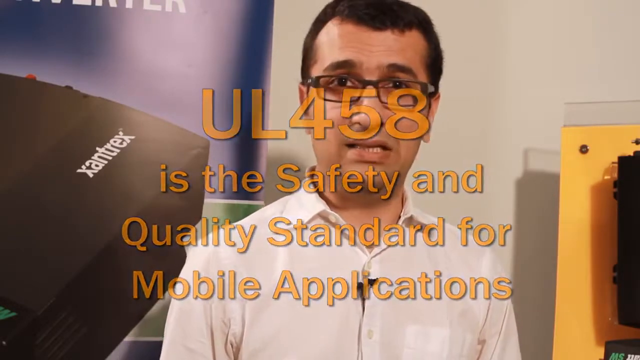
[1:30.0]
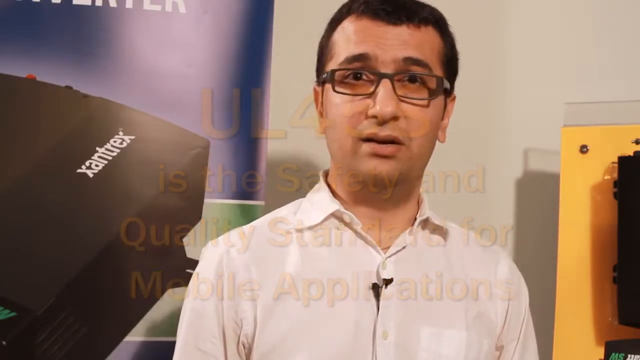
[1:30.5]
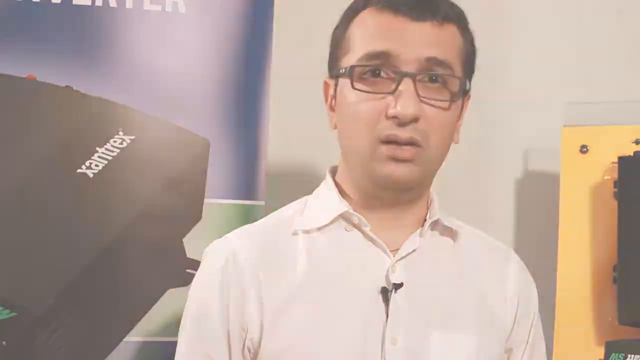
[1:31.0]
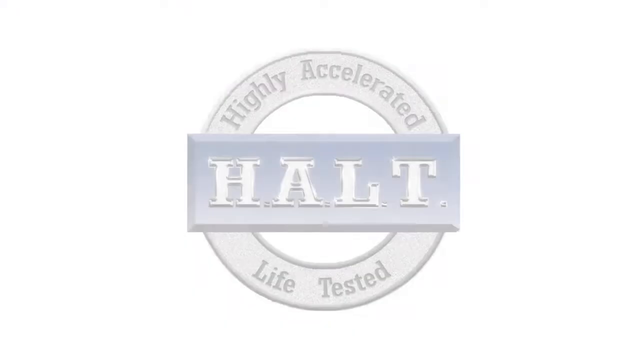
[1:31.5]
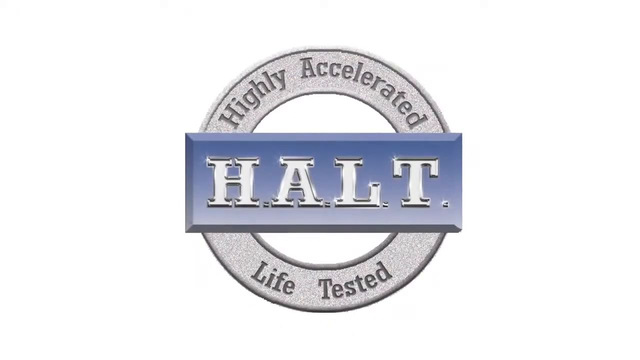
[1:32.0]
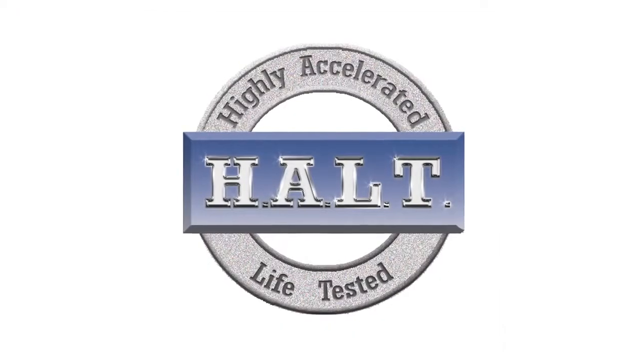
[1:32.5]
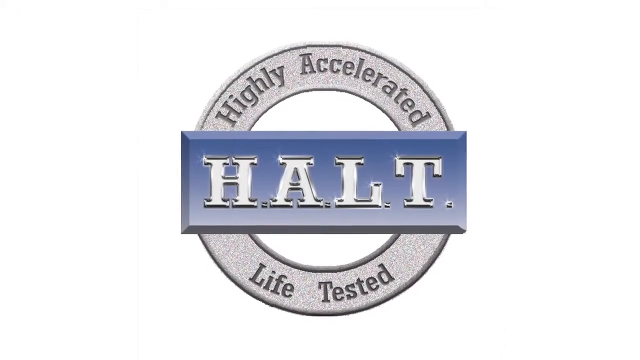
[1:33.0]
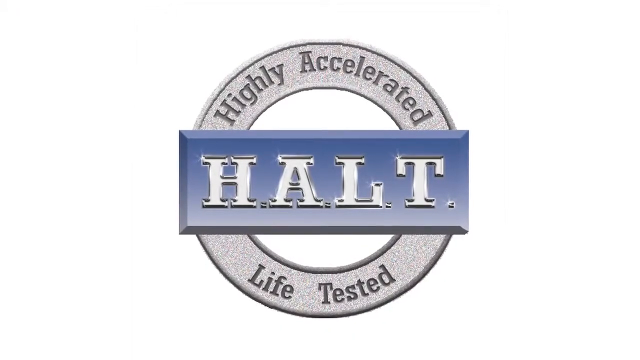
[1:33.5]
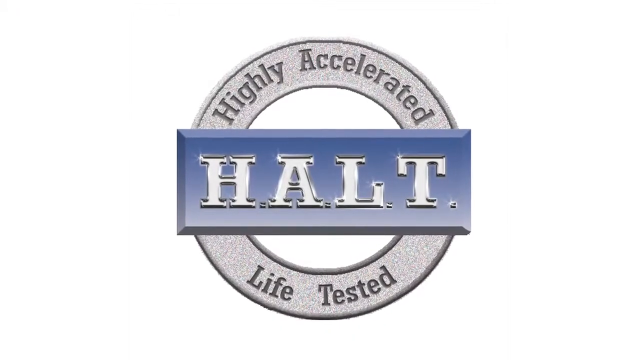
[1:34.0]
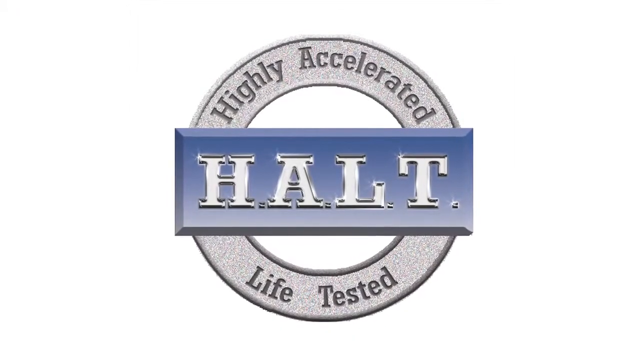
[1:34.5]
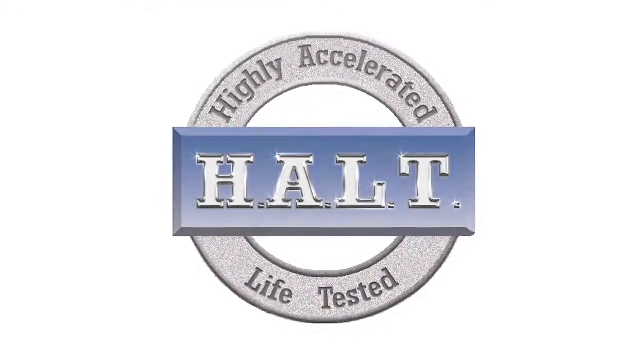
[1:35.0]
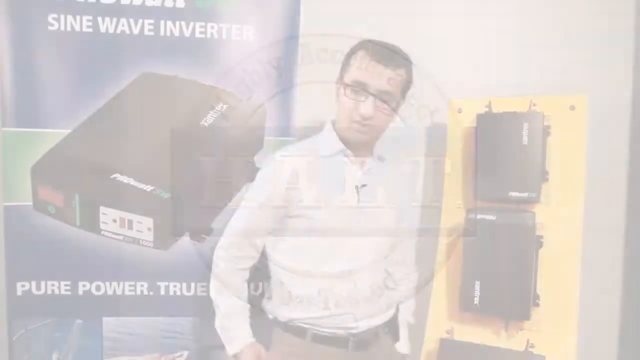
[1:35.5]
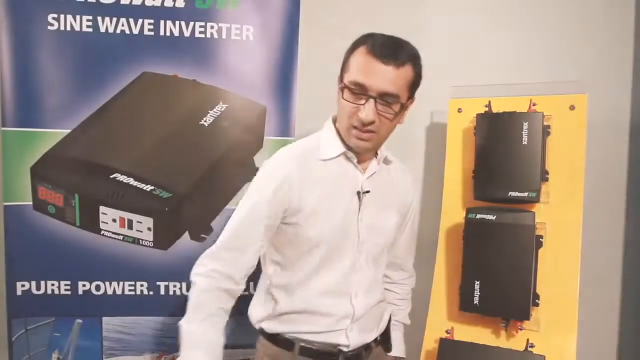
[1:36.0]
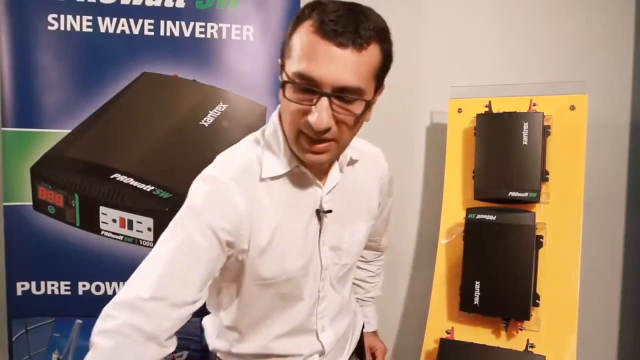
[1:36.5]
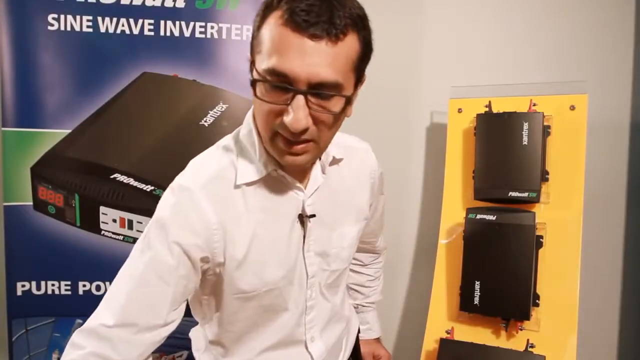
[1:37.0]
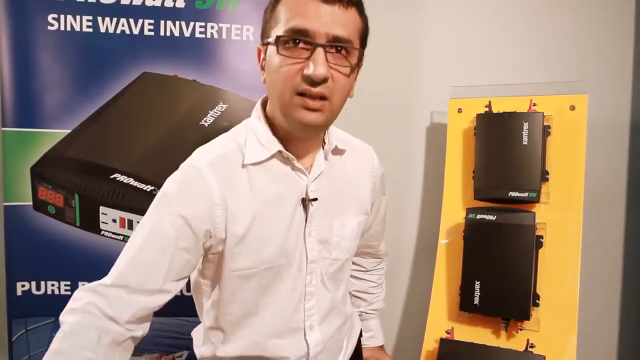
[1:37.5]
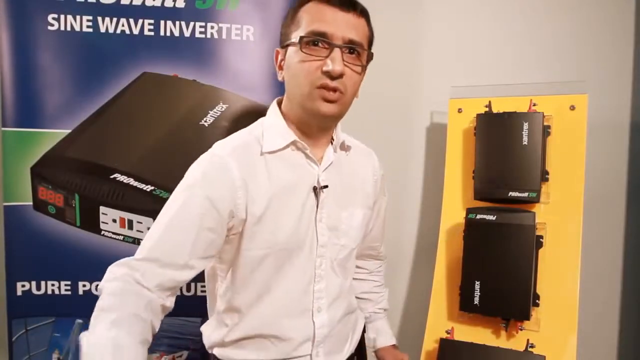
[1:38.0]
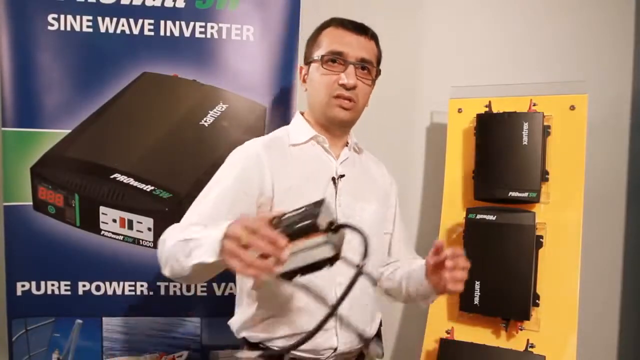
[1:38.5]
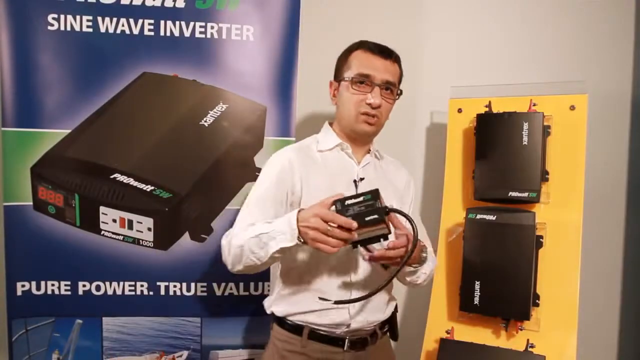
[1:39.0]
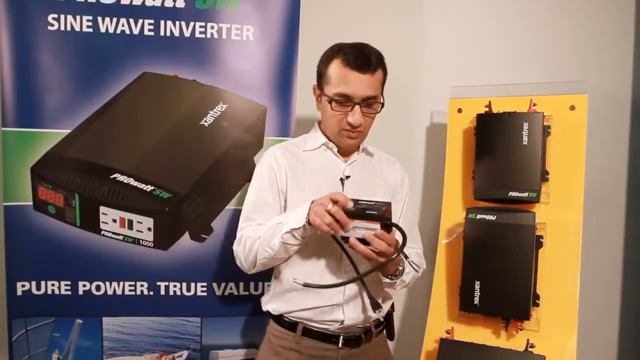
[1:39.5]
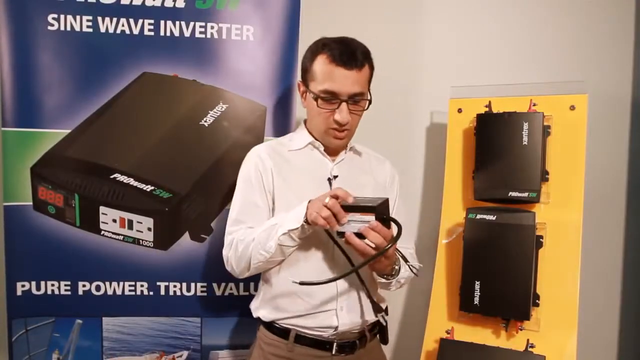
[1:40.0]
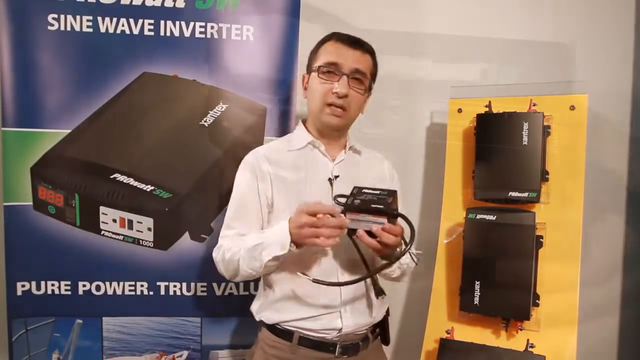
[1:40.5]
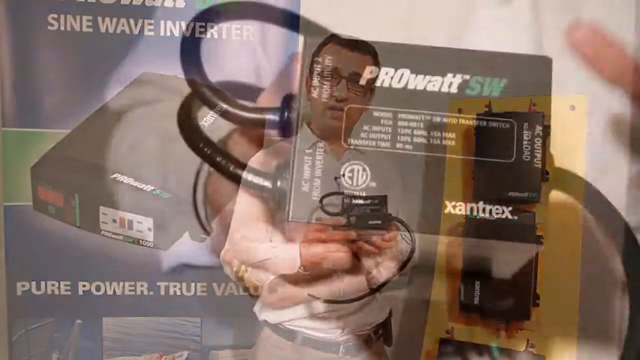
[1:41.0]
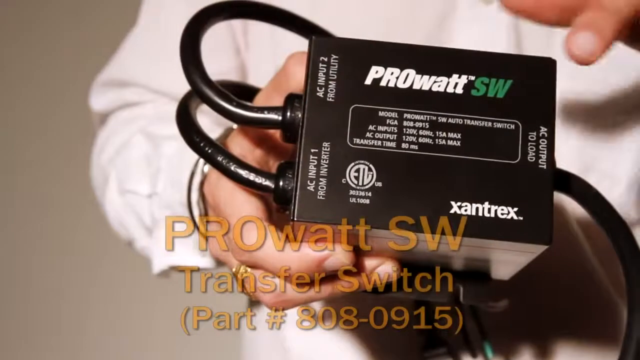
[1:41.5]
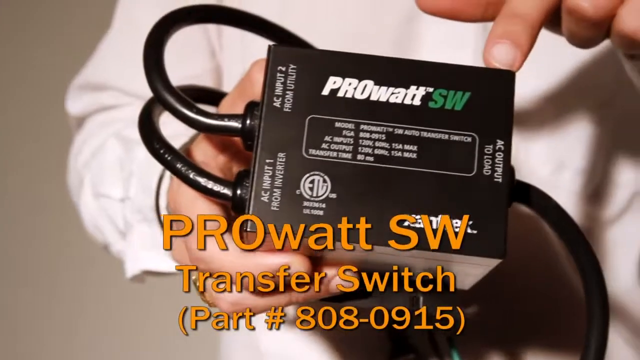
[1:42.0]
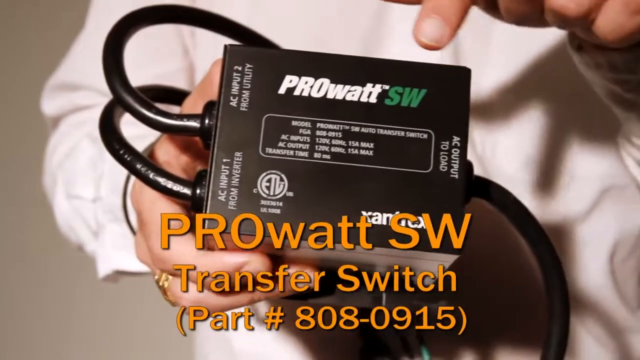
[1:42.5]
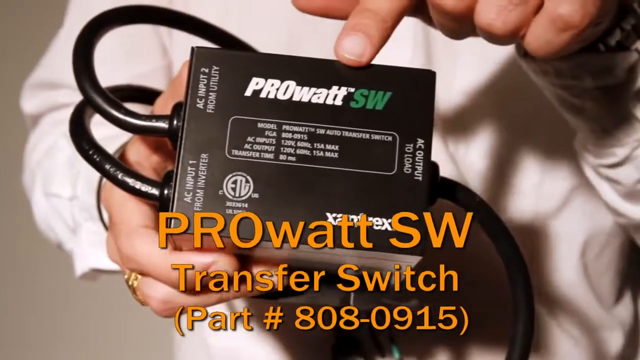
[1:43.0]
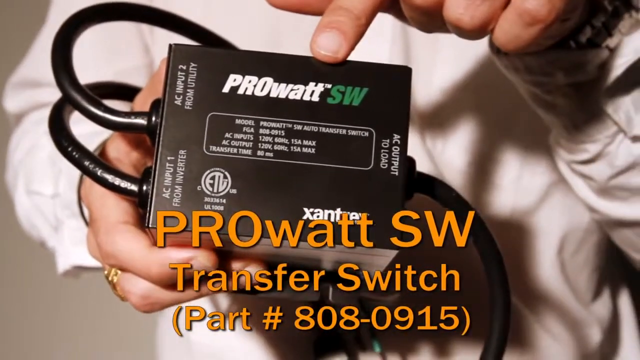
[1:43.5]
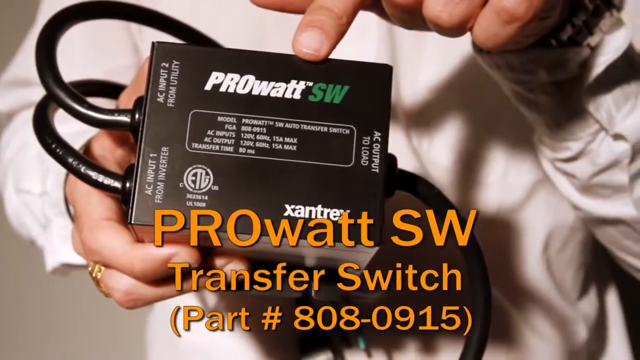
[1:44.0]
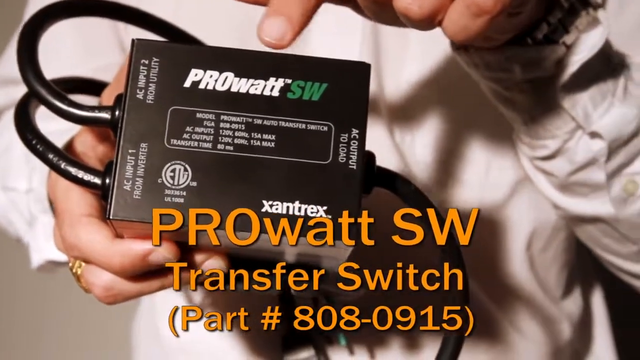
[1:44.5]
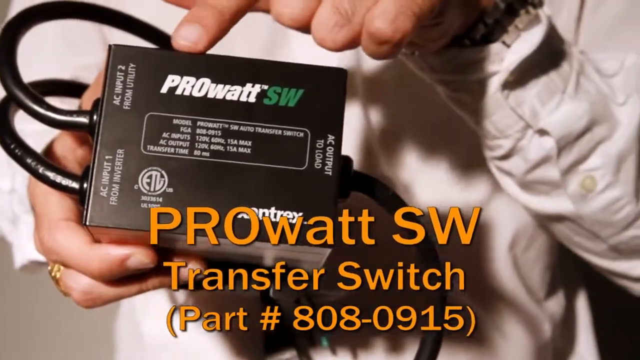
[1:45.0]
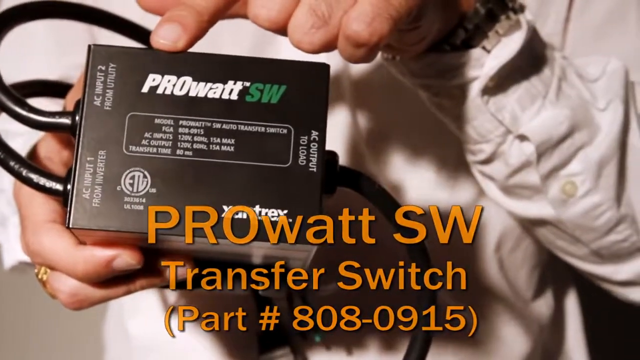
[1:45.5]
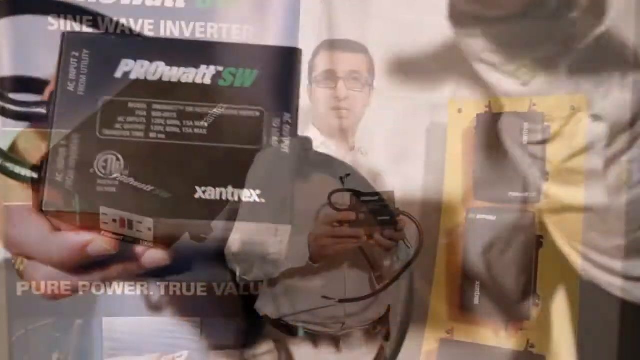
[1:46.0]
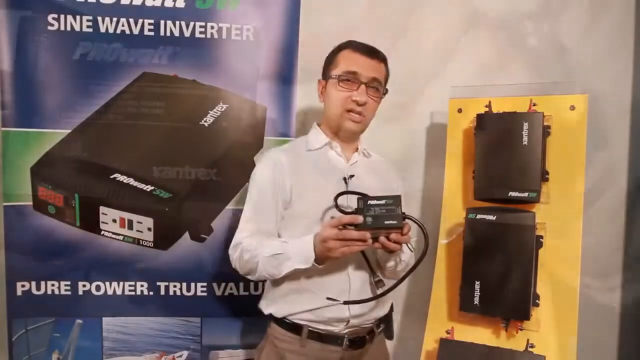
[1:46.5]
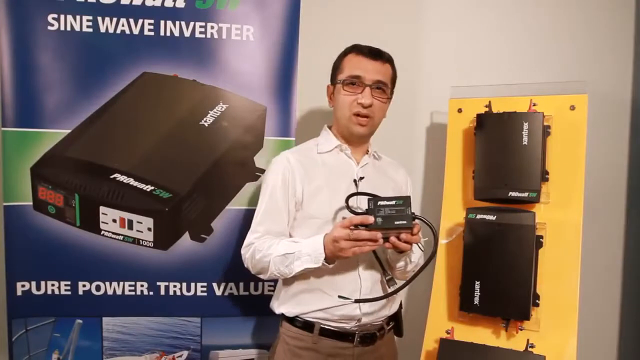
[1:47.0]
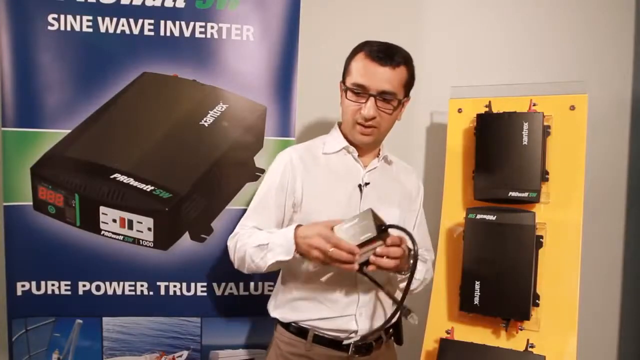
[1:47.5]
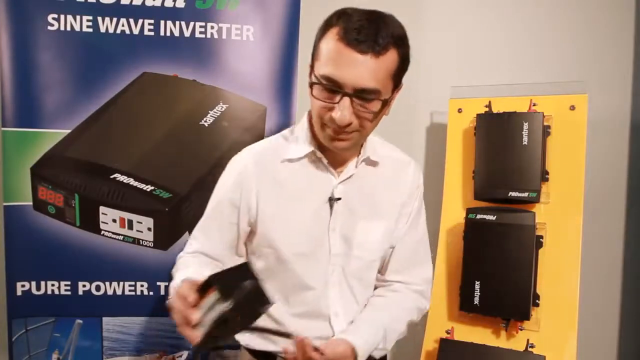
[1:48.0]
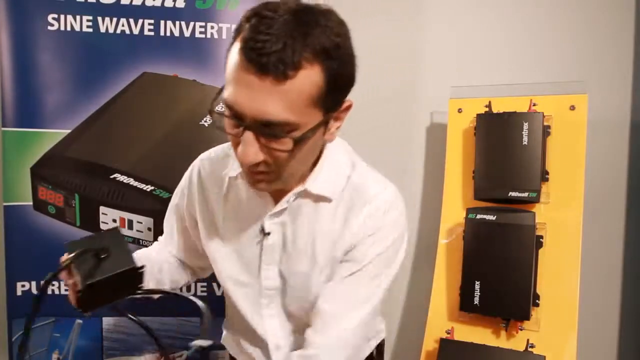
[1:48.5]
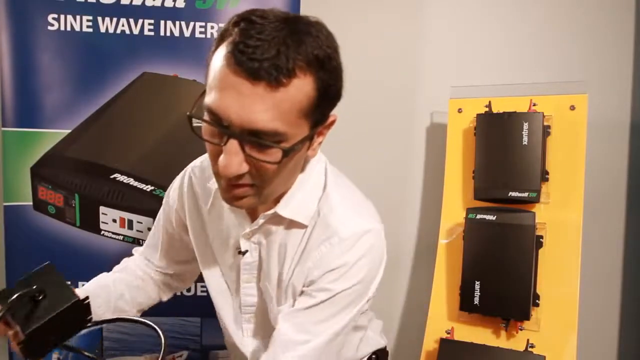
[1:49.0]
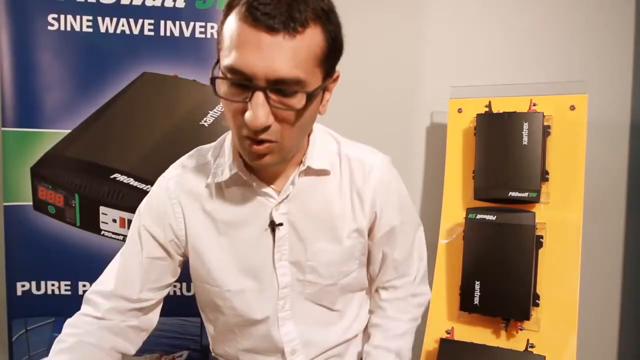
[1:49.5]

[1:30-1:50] A man with rectangular glasses, black hair, a button-up shirt and a microphone attached to his shirt talks, with orange text in front of him reading "UL458 is the safety and quality standard for mobile applications." As he talks, the video switches to a logo reading "HALT" in a rectangular shape, with a circle behind it reading "Highly Accelerated Life Tested" in grey. The man returns on camera and picks up something with his right hand, bringing it up to show the camera: a rectangular box with power attached and a cable on each side. He looks at it while talking. The video switches to show the device, almost a rectangular cube, with "pro watt sw" on the front and details about "AC input 1" and "AC input 2": AC input 1 comes from the inverter and AC input 2 from utility, and on the other side is "AC output to load." The man points to the output area, and orange overlay text reads "pro watt sw transfer switch part number 808-0915." The camera zooms back to show the man with a poster behind him and the board with several Xantrex wave inverters attached, and he sets down the device.